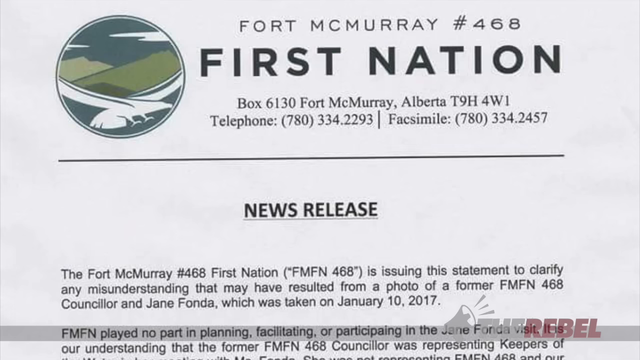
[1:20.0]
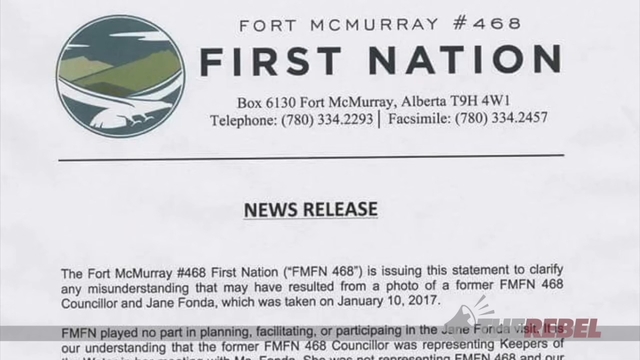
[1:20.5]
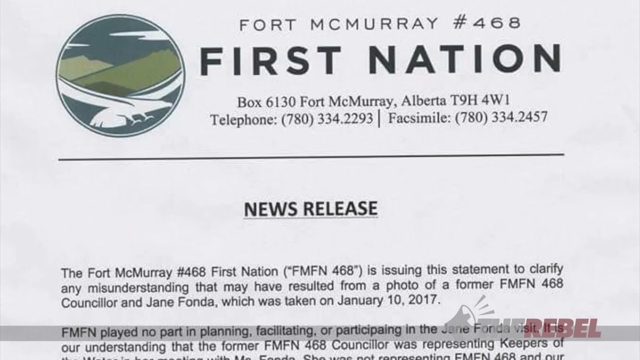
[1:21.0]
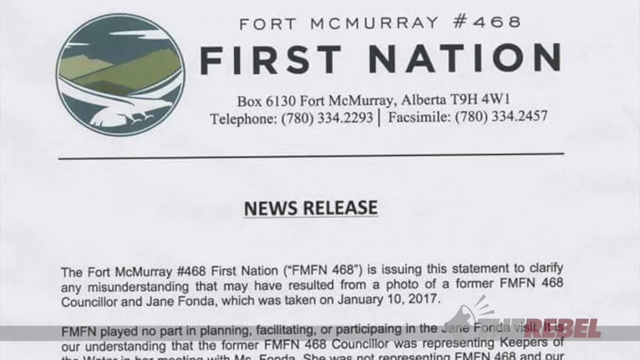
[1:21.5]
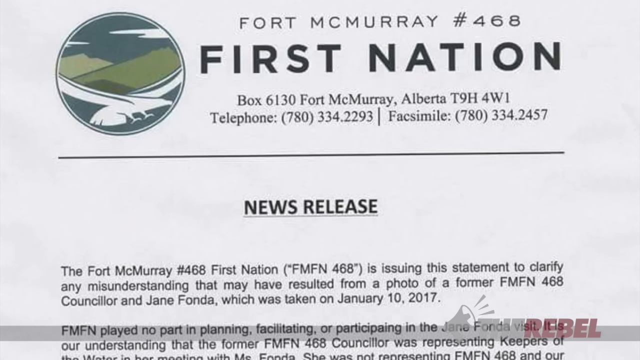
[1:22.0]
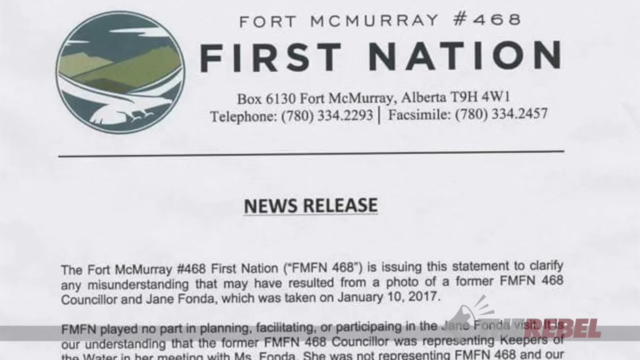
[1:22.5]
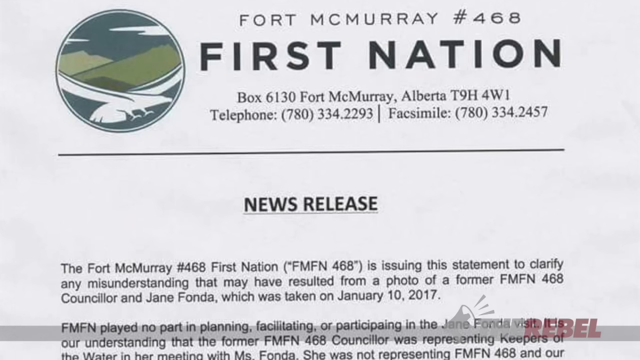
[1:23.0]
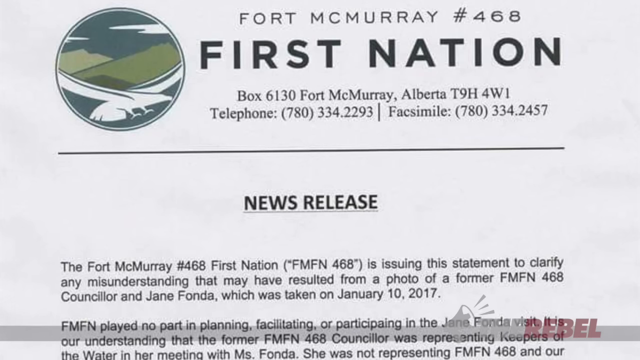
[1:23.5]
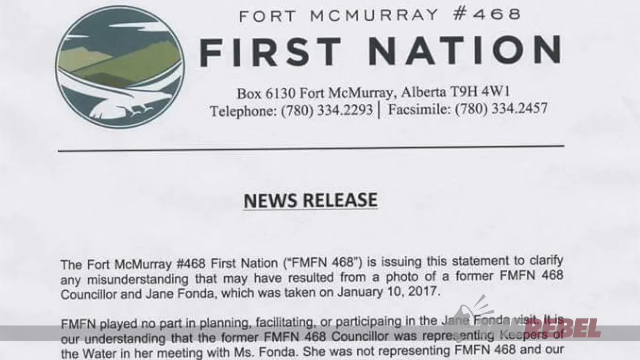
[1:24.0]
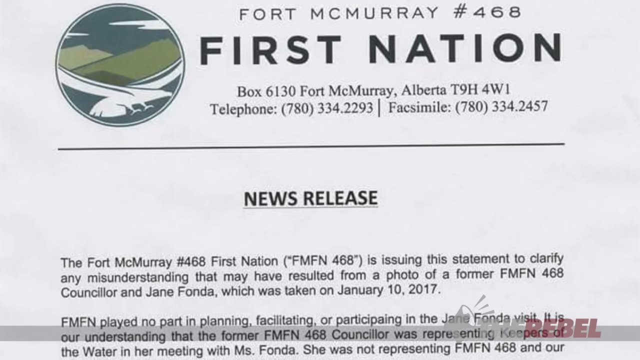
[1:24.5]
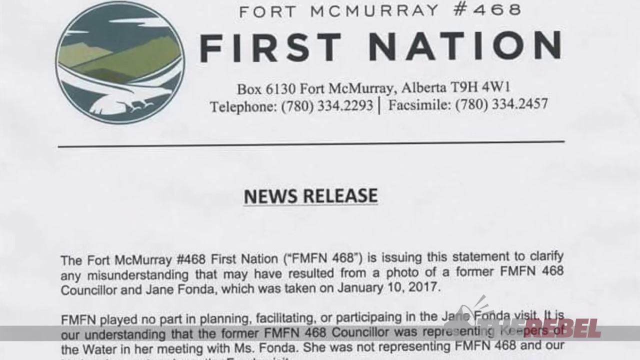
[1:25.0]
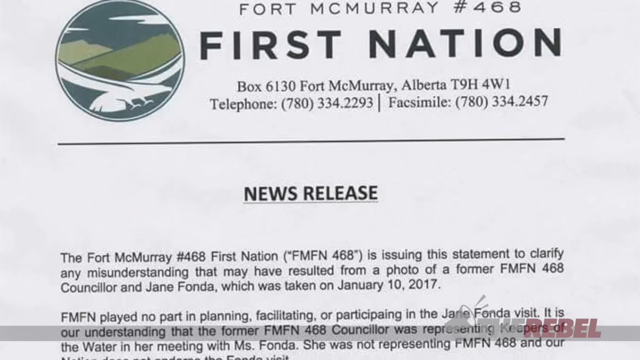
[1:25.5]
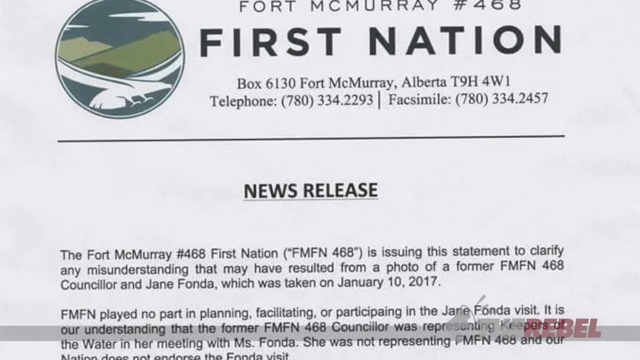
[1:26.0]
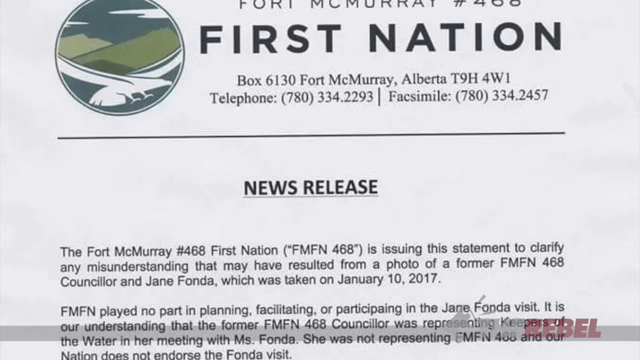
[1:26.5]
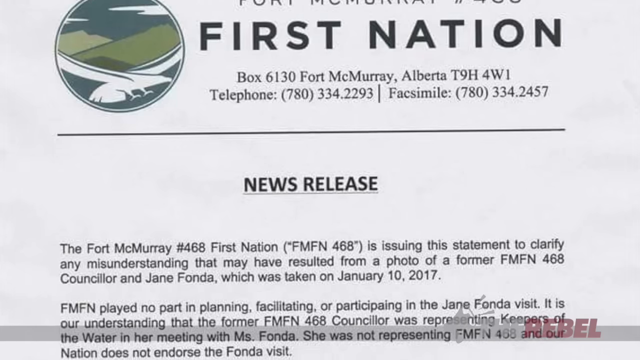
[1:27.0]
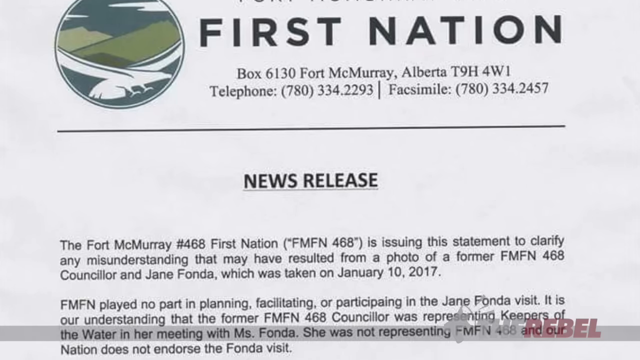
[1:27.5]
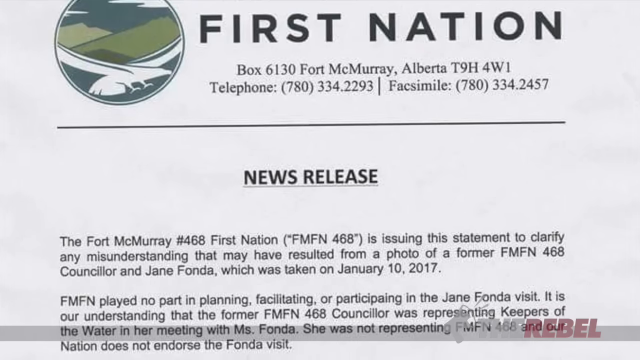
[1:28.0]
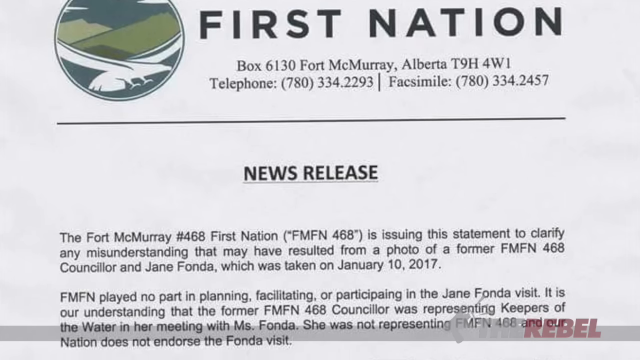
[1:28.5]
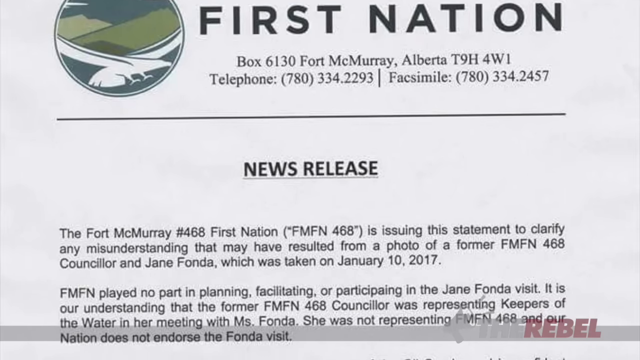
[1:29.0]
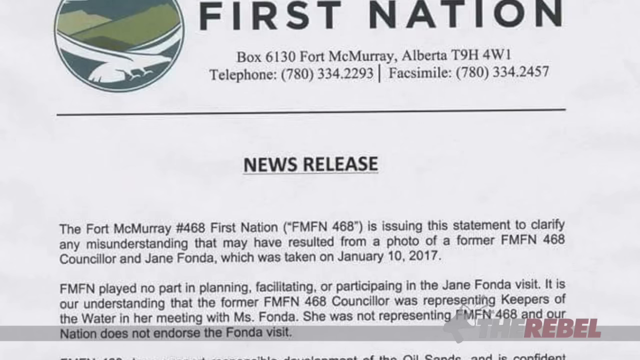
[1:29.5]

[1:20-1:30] A news release from the Fort McMurray 468 First Nation appears. On the left is a logo of an eagle or some kind of bird flying toward the right side of the logo, with mountains, blue sky and clouds in the background. Under the title the text reads "Box 6130 of Fort McMurray, Alberta, T9H, 4W1", with telephone "780-334-2293" and fax number "780-334-2457". The release states that the Fort McMurray 468 First Nation, FMFN 468, is issuing the statement to clarify any misunderstanding that may have resulted from a photo of a former FMFN 468 councillor and Jane Fonda, taken on January 10th of 2017.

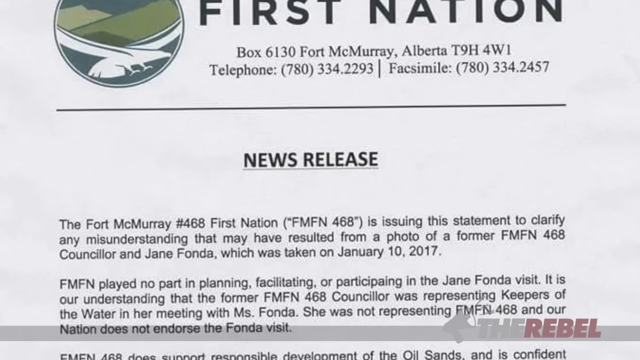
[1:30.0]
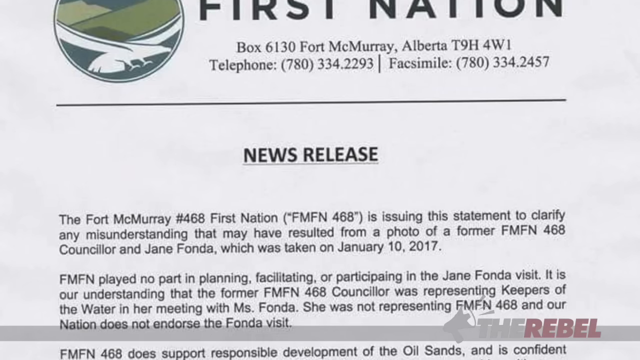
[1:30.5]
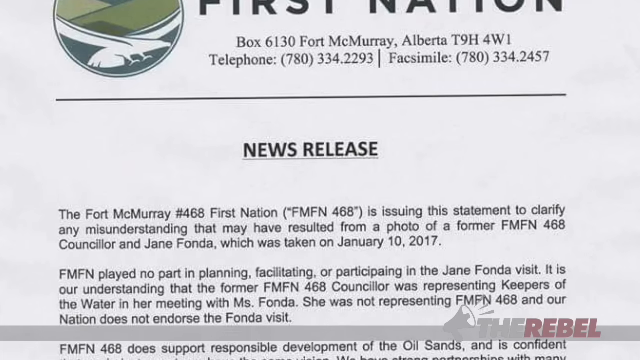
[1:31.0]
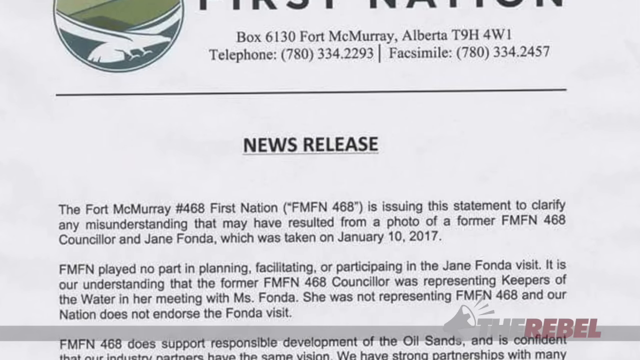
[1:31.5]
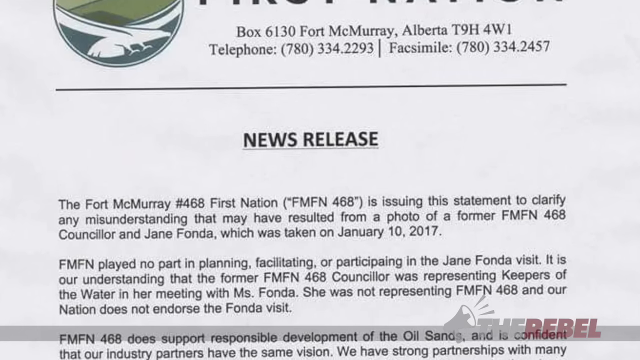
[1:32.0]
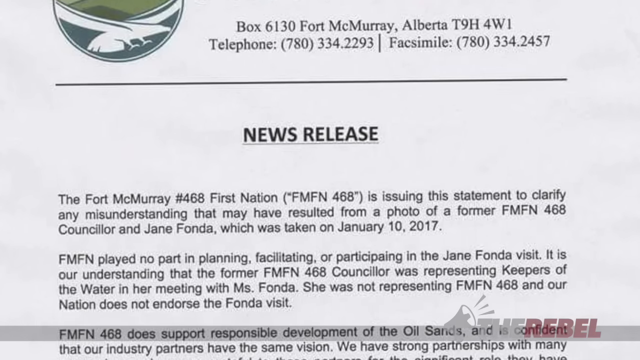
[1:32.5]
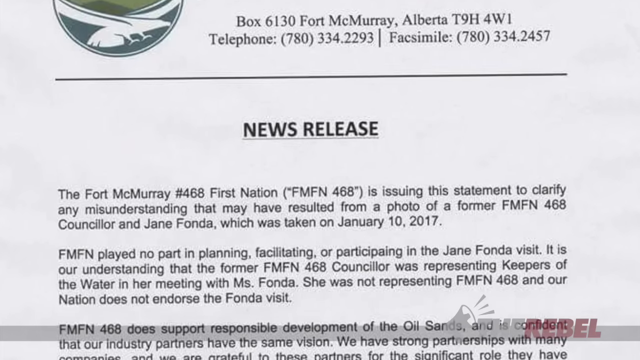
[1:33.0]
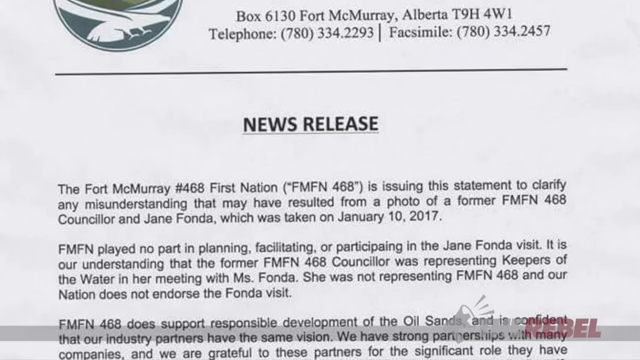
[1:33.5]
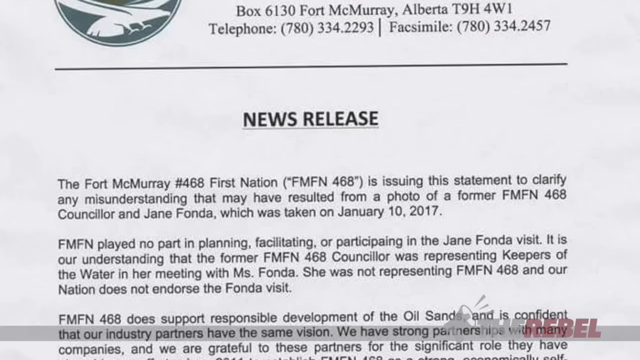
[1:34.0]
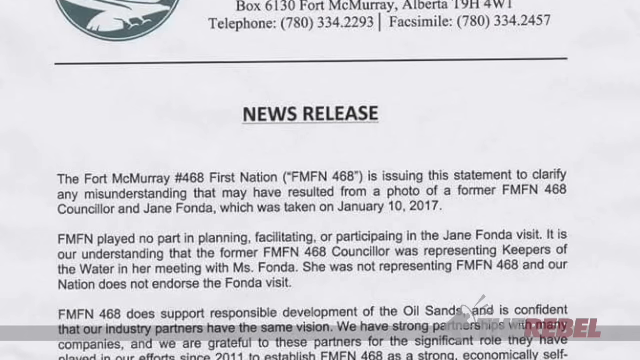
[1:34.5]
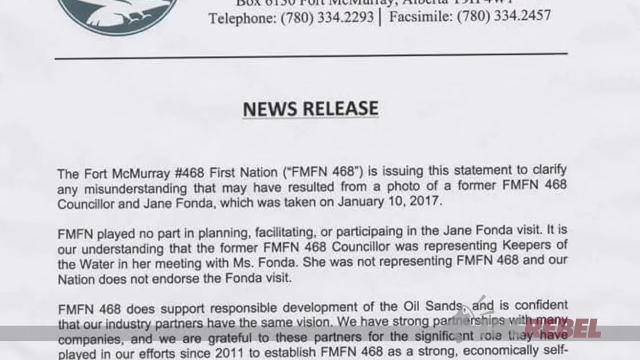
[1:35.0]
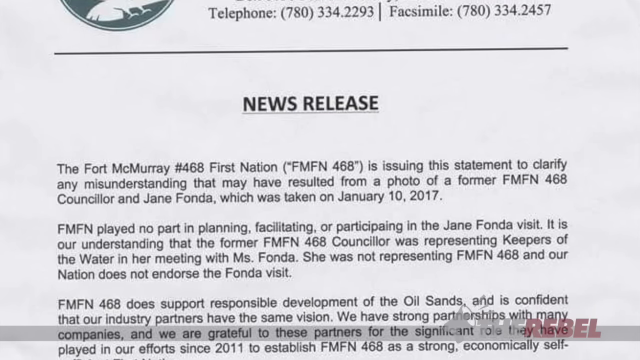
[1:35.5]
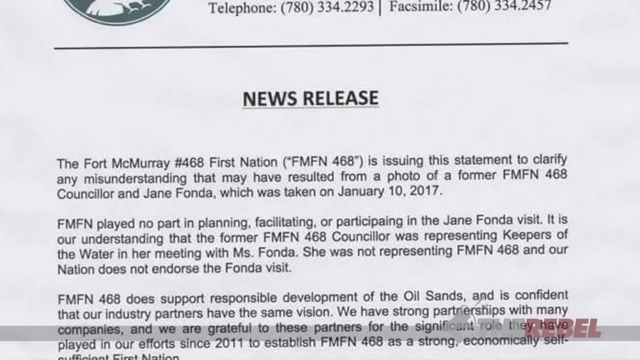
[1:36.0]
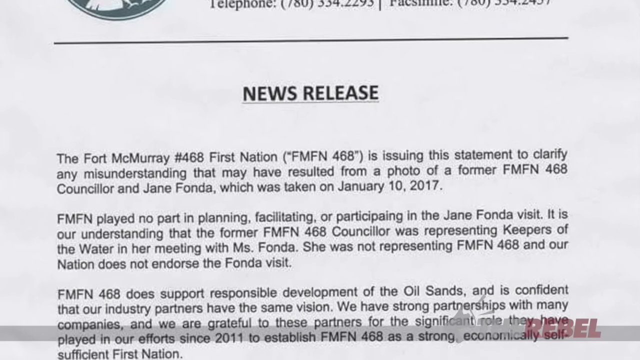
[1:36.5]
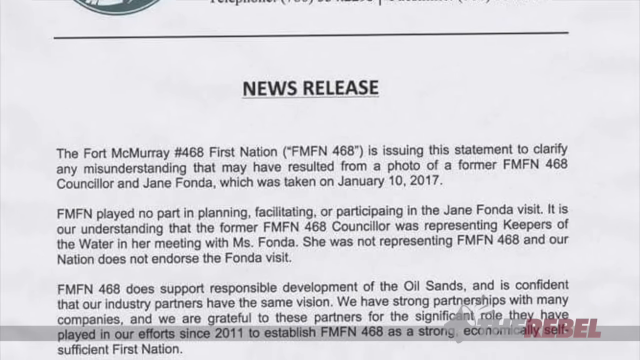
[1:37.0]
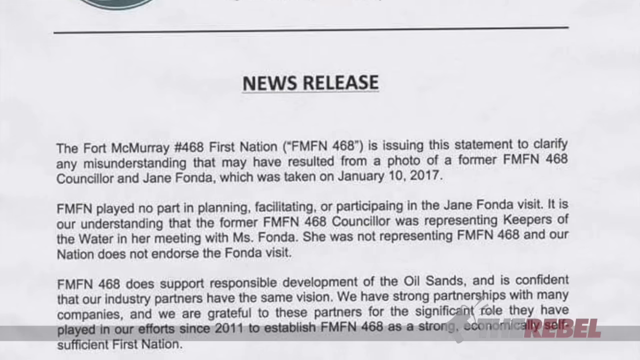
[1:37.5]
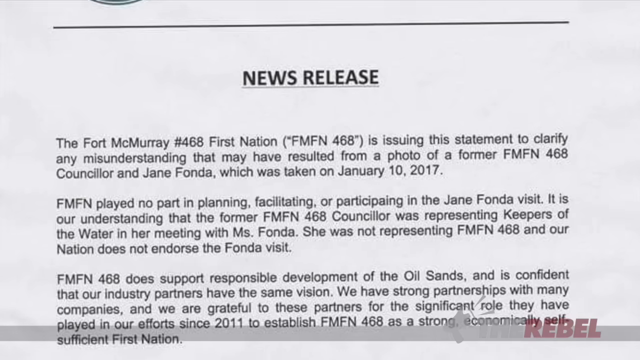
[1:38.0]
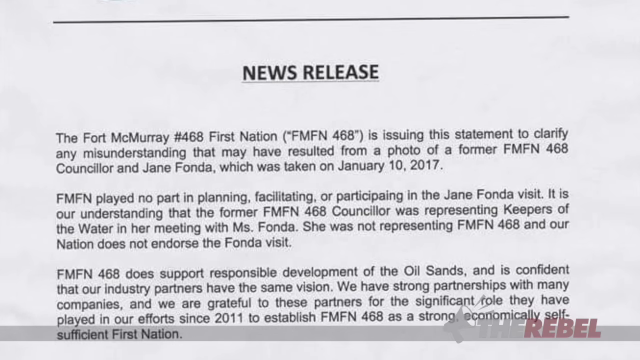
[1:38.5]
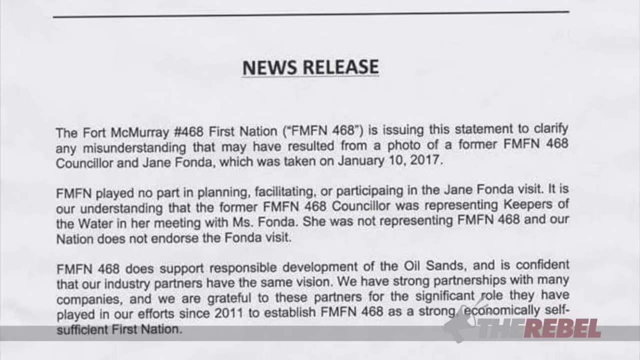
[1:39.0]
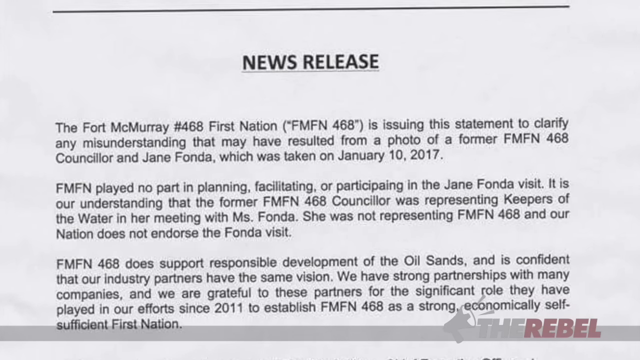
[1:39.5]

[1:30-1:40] The news release continues, reading: "FMFN played no part in planning, facilitating, or participating in the Jane Fonda visit. It is our understanding that the former FMFN 468 Councillor was representing keepers of the water in her meeting with Ms. Fonda. She was not representing FMFN 468 and our Nation does not endorse the Fonda visit." It goes on to say that FMFN 468 does support responsible development of the oil sands and is confident its industry partners have the same vision, and that it has strong partnerships with many companies. The text continues further down.